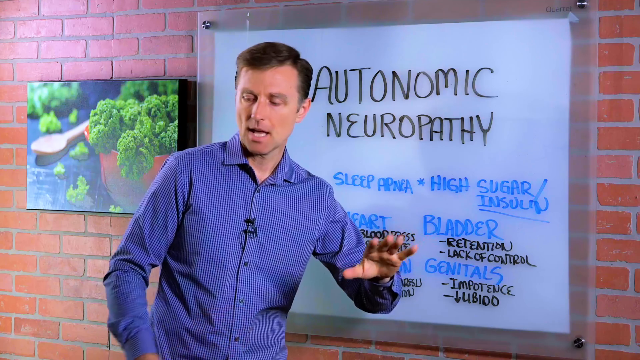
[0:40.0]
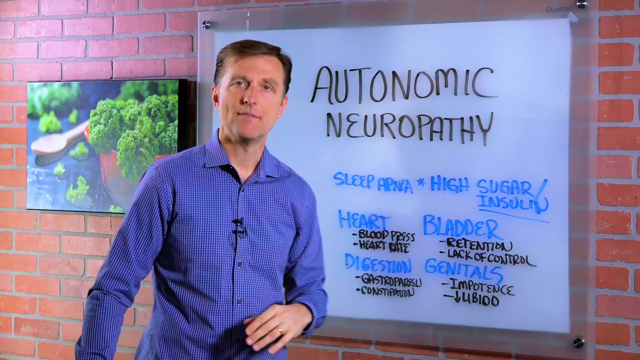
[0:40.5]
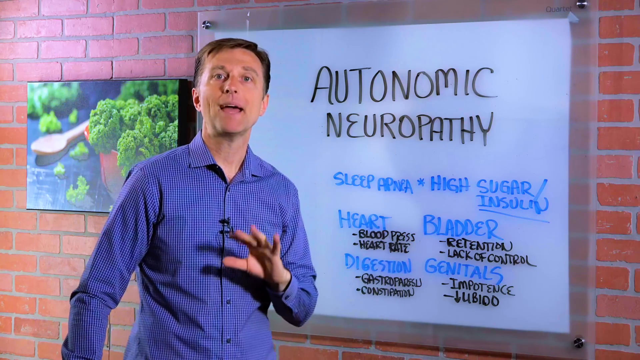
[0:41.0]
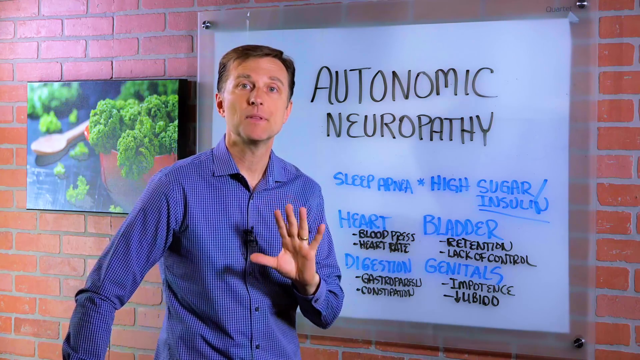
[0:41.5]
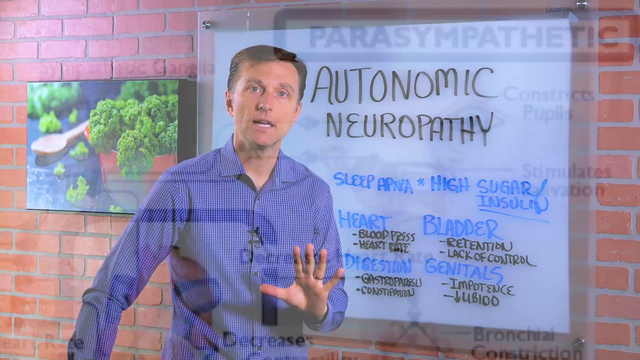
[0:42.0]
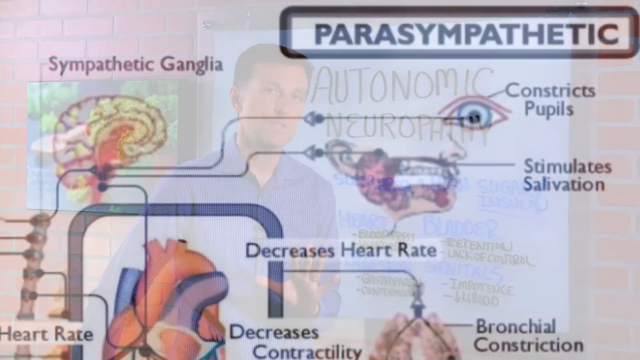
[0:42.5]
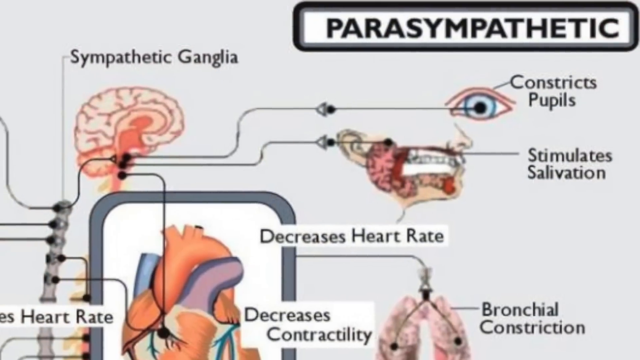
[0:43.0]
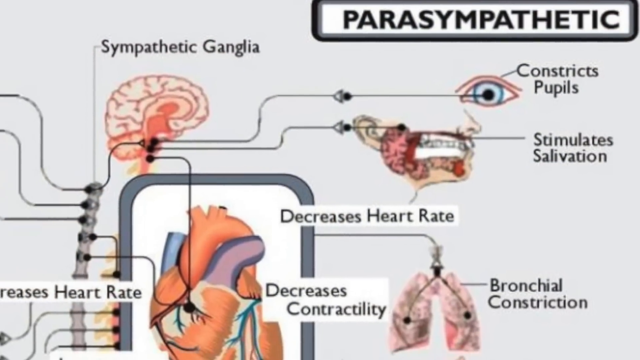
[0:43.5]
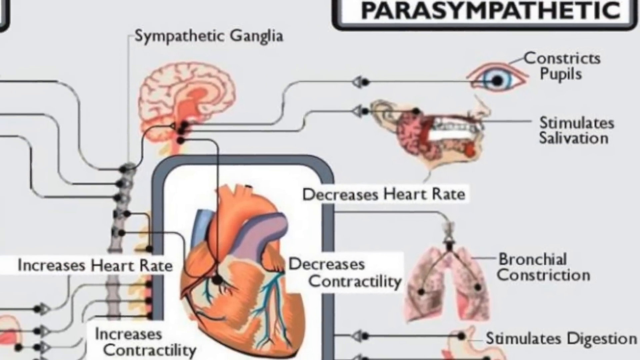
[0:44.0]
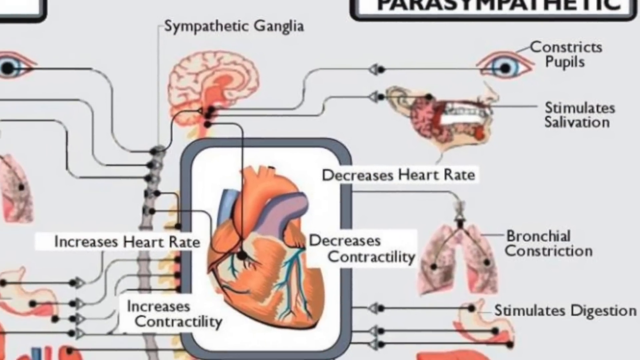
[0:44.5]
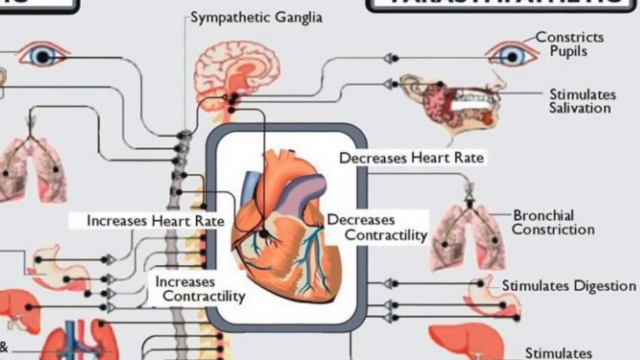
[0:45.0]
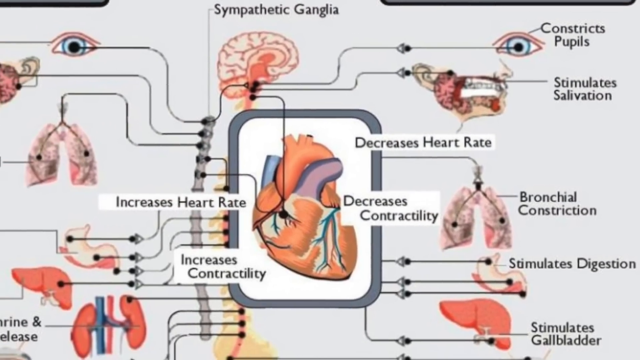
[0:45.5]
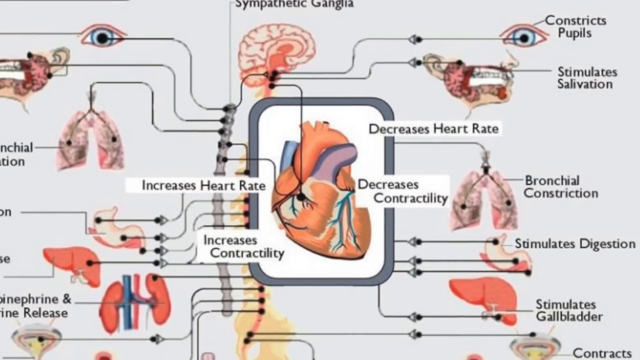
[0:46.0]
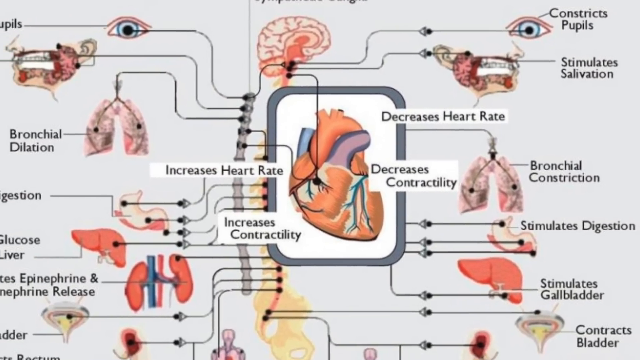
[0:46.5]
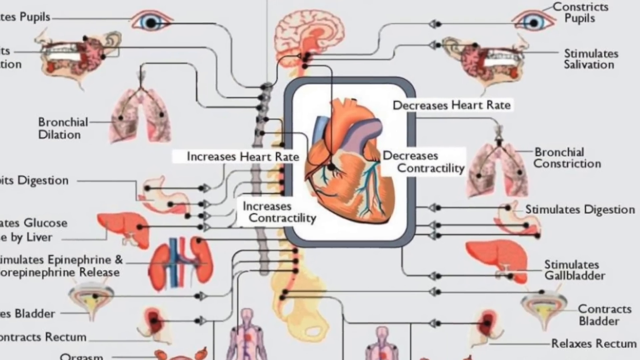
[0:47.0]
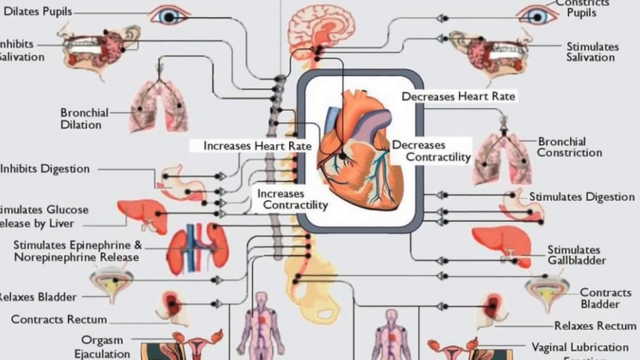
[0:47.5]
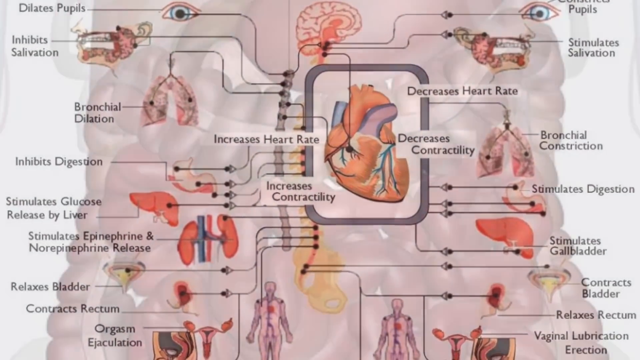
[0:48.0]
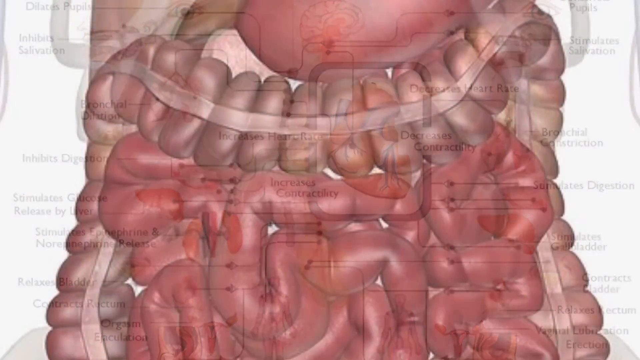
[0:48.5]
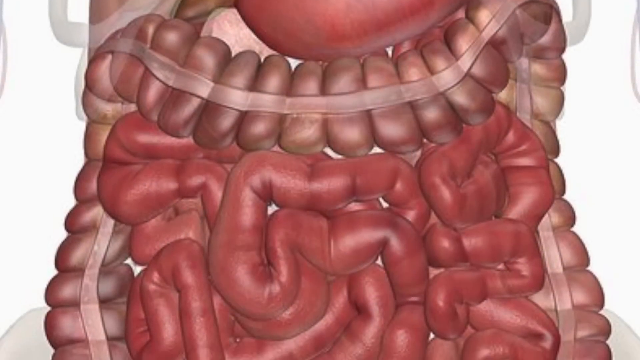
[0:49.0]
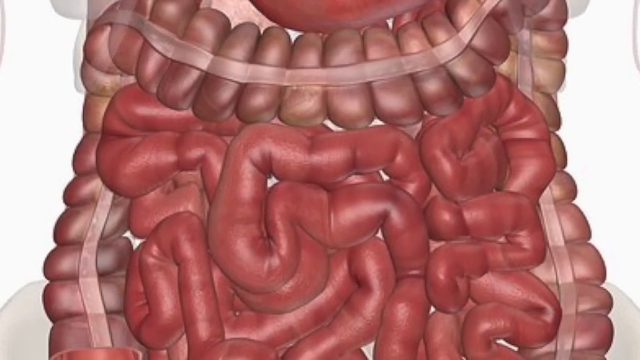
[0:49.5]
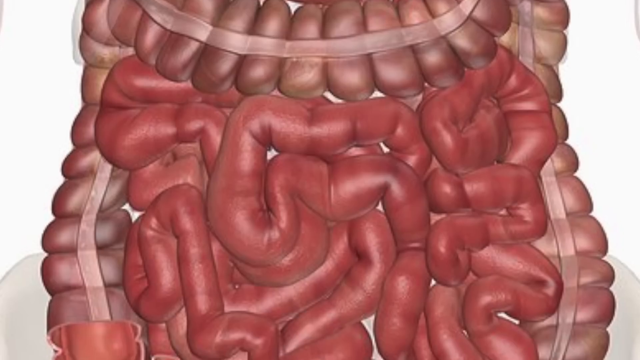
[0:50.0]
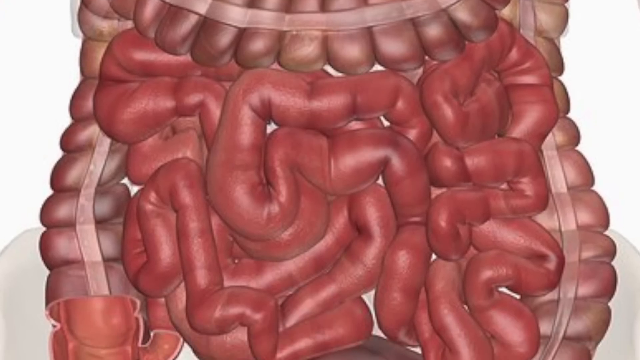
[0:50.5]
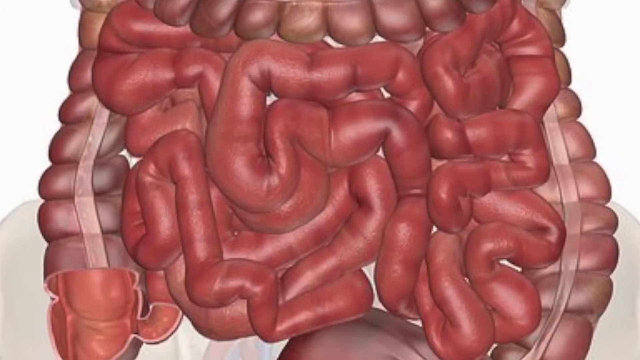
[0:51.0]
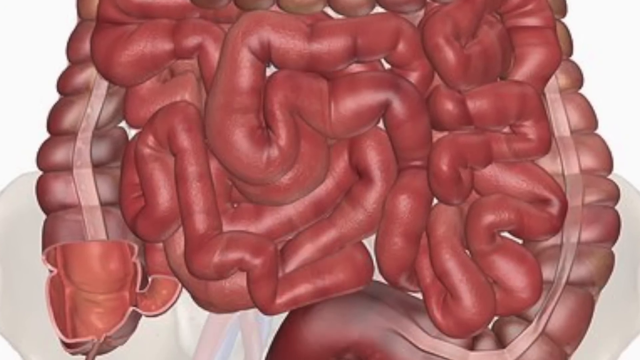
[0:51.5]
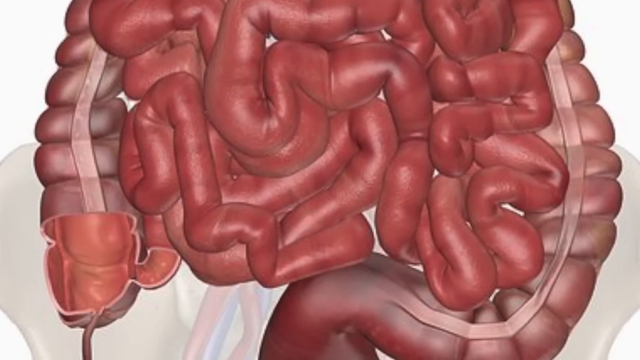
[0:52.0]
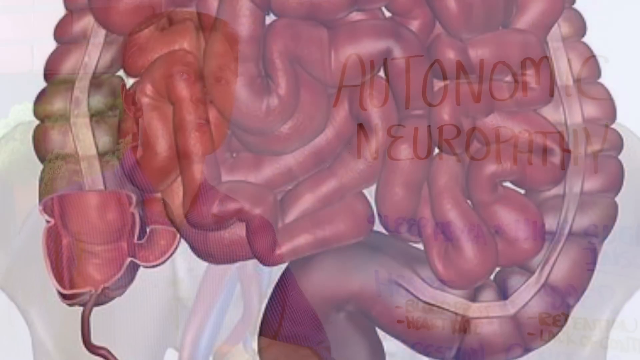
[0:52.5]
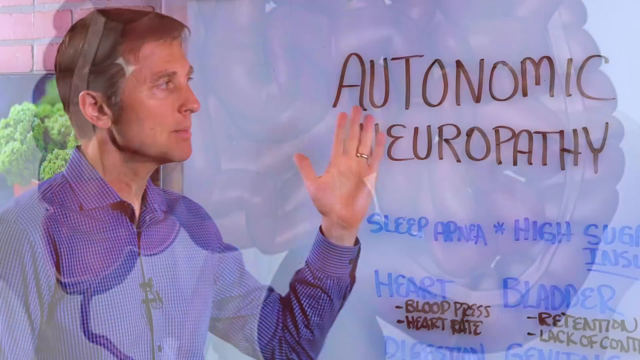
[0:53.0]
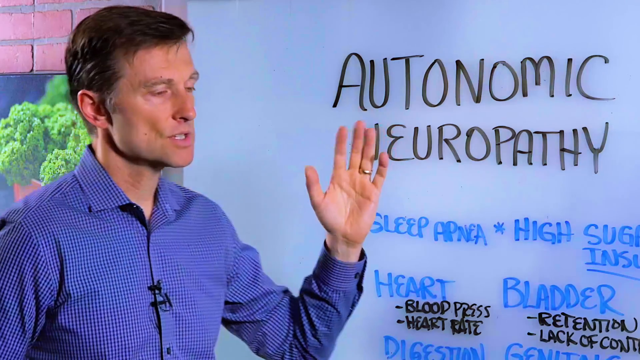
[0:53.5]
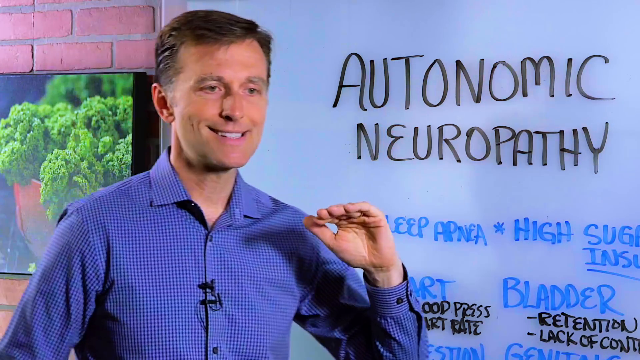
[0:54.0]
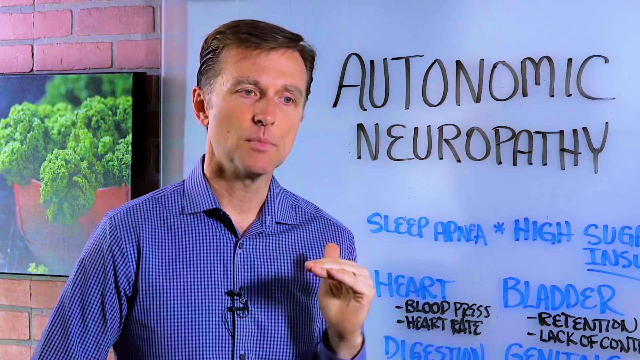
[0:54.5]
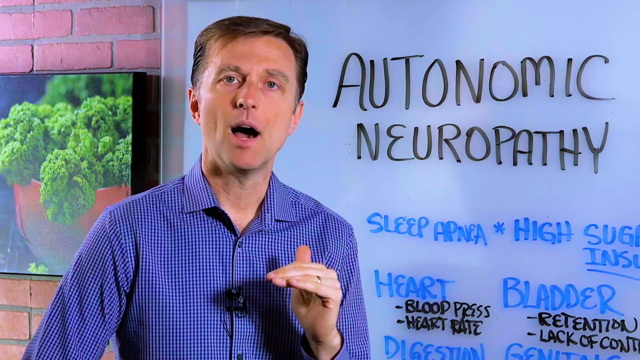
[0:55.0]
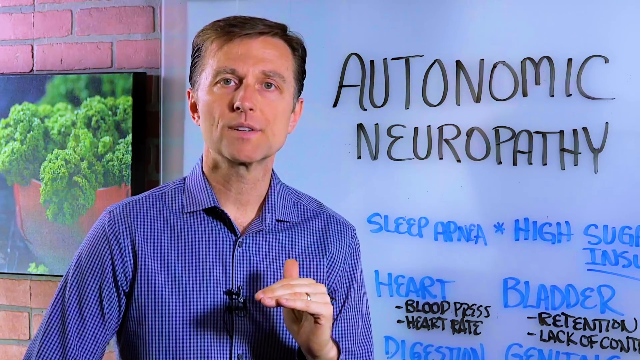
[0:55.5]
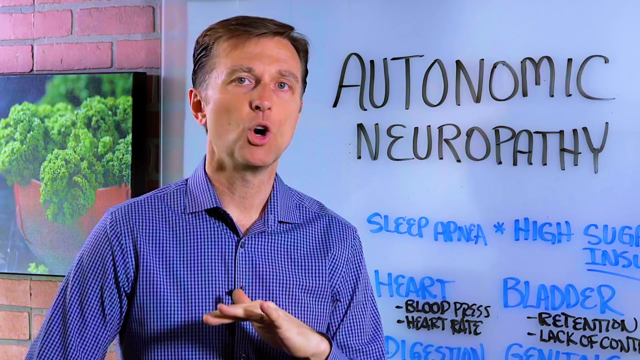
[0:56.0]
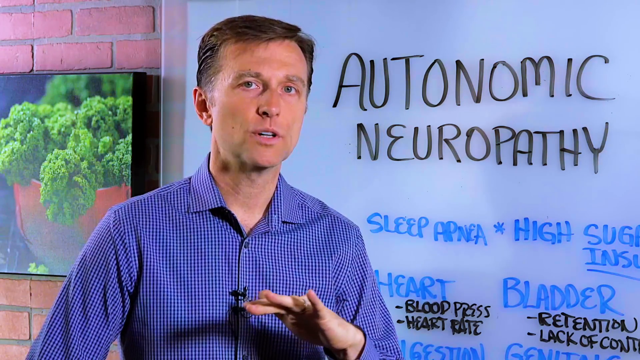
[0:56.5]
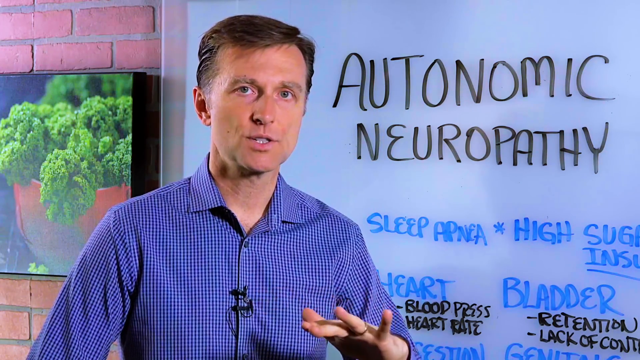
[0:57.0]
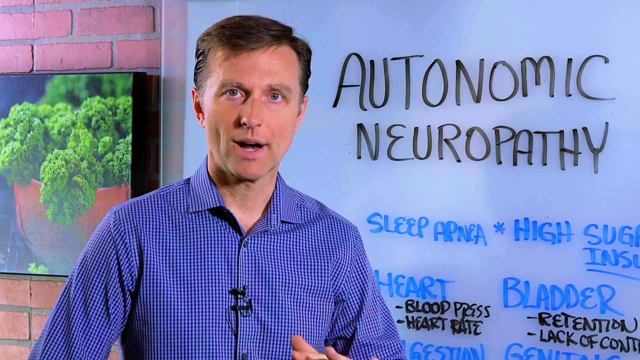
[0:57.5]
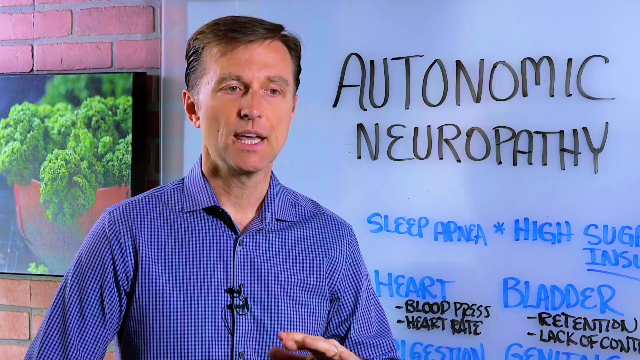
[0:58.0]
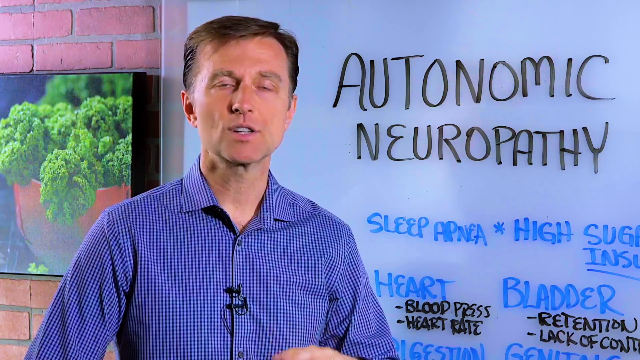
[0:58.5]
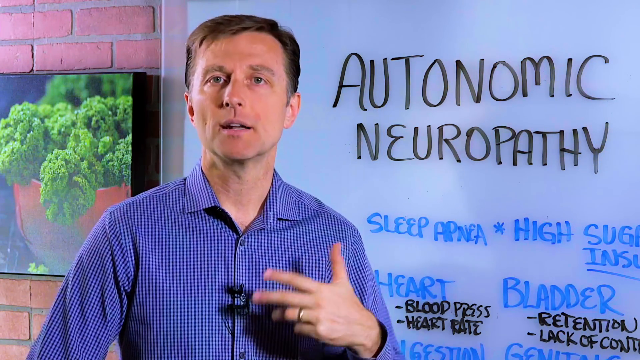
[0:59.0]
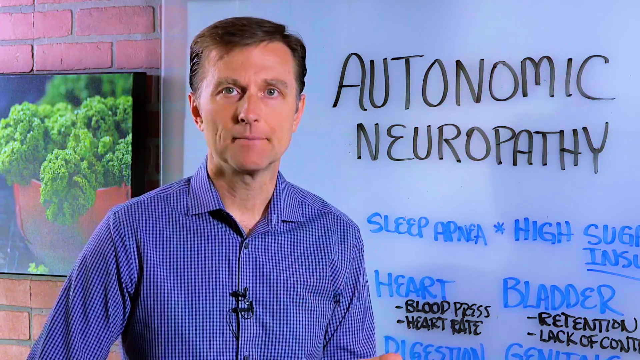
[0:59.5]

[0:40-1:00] Dr. Mandel is still speaking to his audience; he appears to be making a YouTube video. He looks slightly to his right side, with only his neck turned a bit while his body still faces the camera. His head is slightly bent to the left, and his body is slightly bent from the waist to his left. His left arm is outstretched from his body and bent at the elbow, with his palm facing the camera and his fingers outstretched. His right arm is down toward his body, bent at the elbow. He uses his arms and hands in front of his body to emphasize his words. Next, he adjusts his body and looks straight ahead into the camera, his left arm still bent at the elbow, palm facing the camera and fingers outstretched.